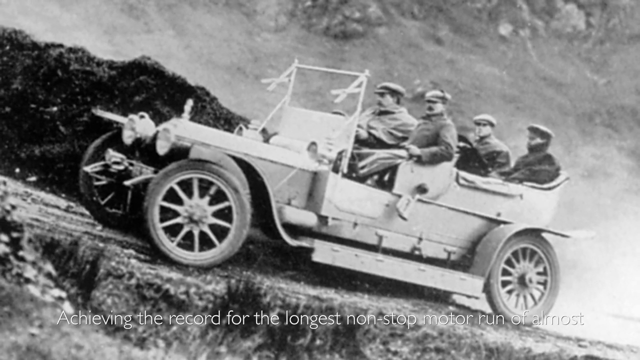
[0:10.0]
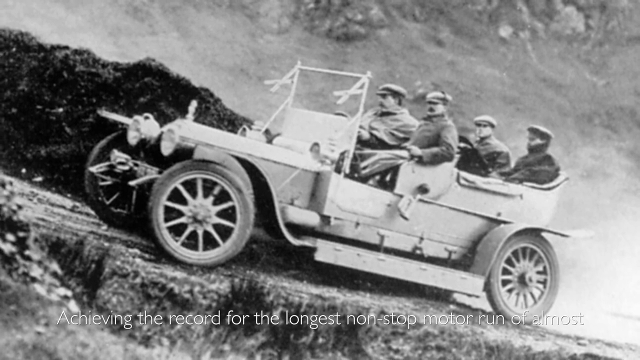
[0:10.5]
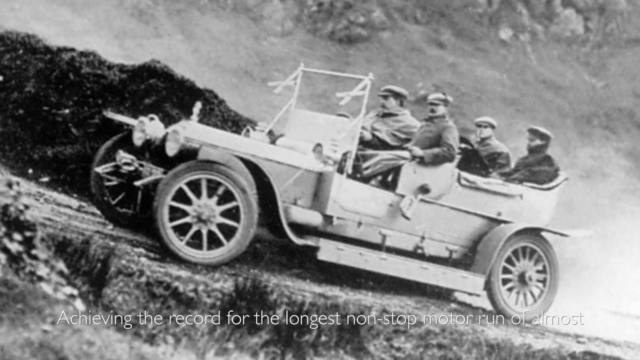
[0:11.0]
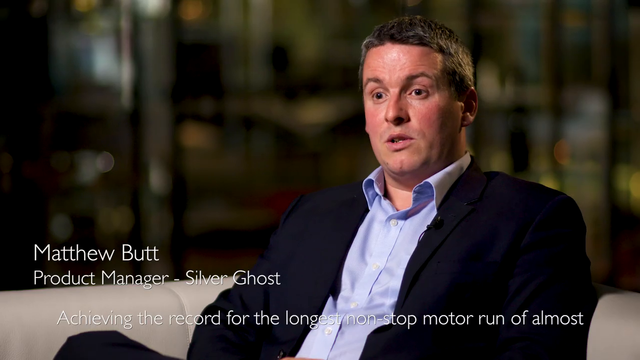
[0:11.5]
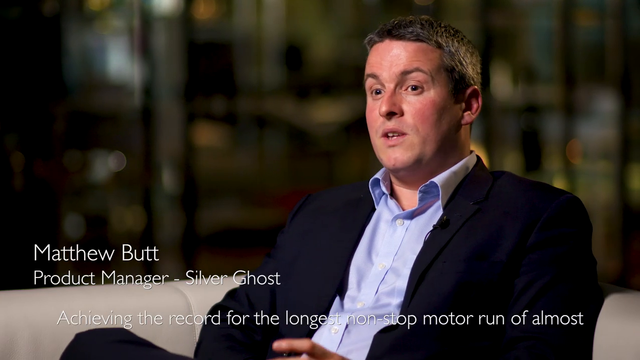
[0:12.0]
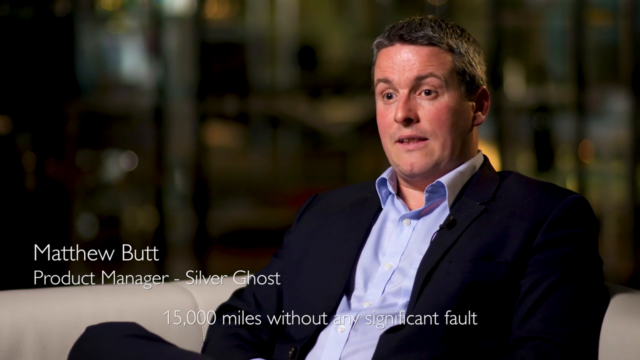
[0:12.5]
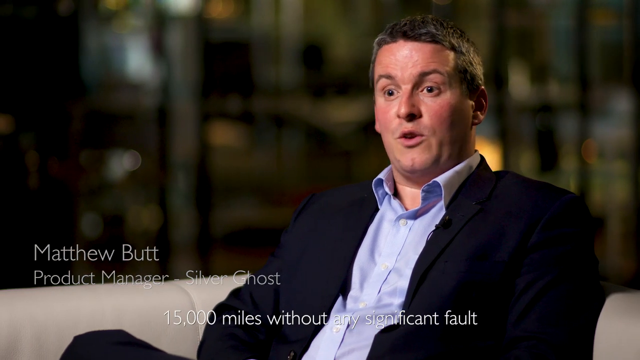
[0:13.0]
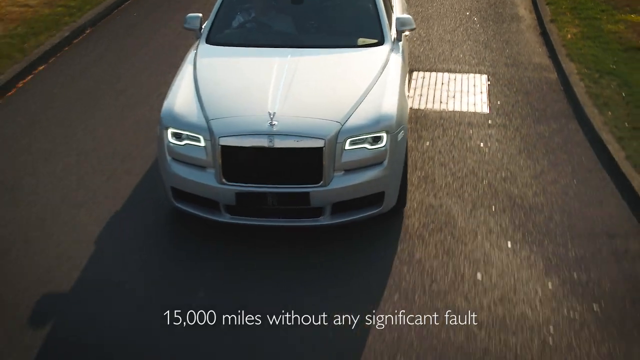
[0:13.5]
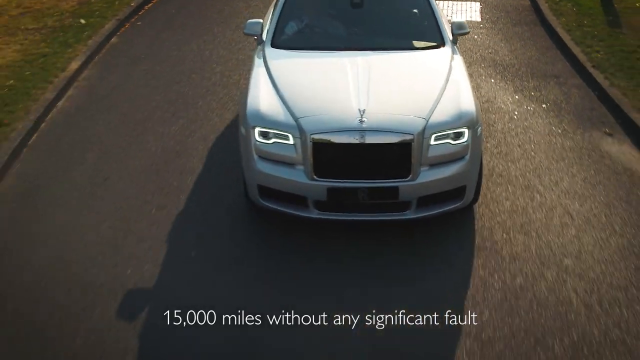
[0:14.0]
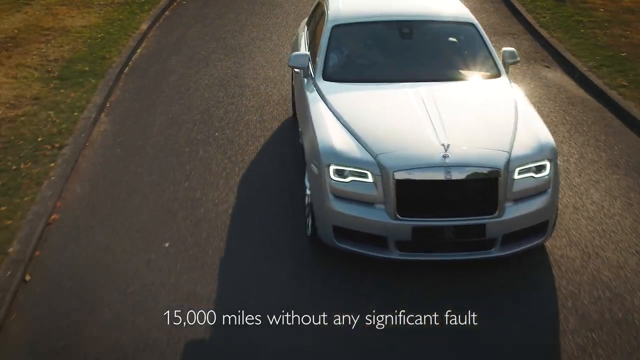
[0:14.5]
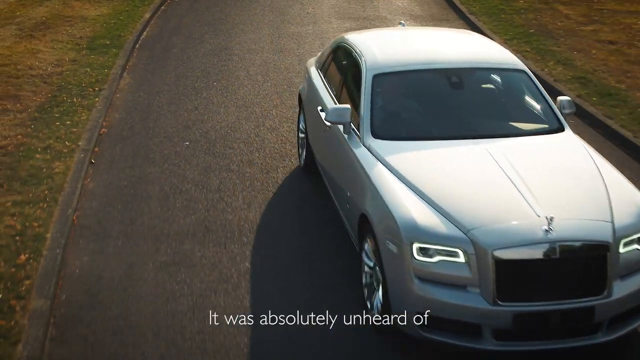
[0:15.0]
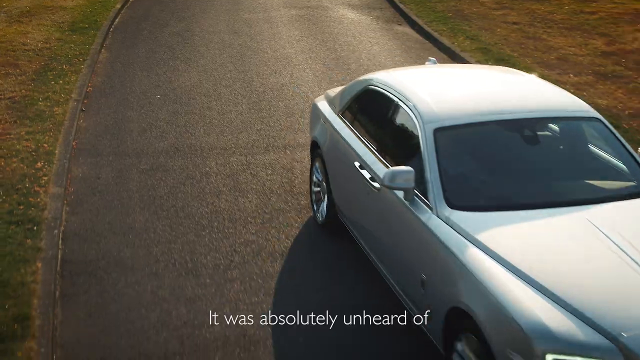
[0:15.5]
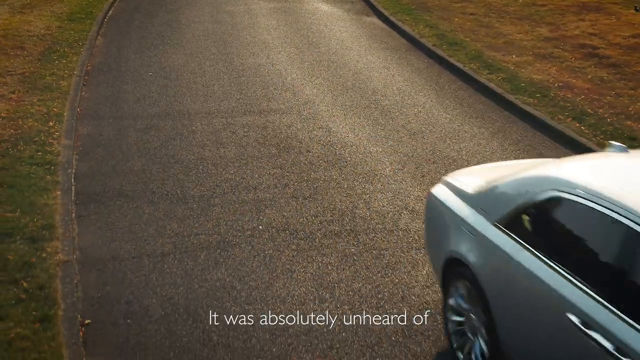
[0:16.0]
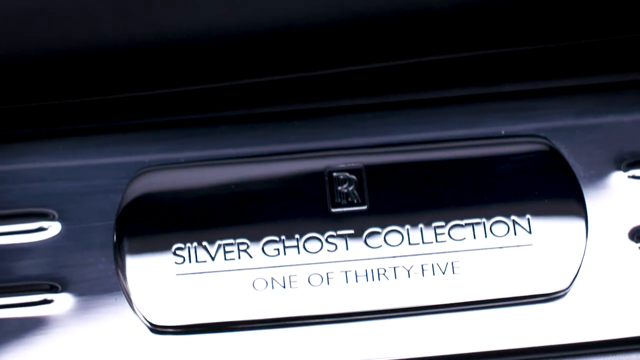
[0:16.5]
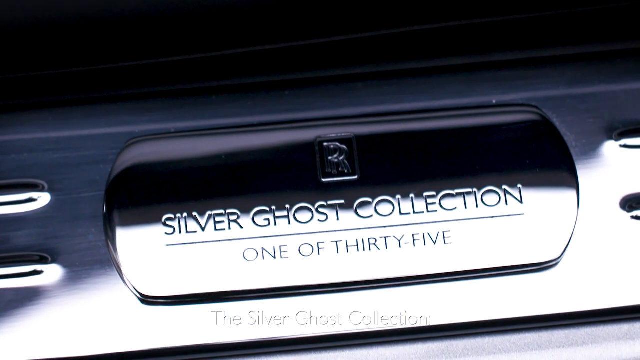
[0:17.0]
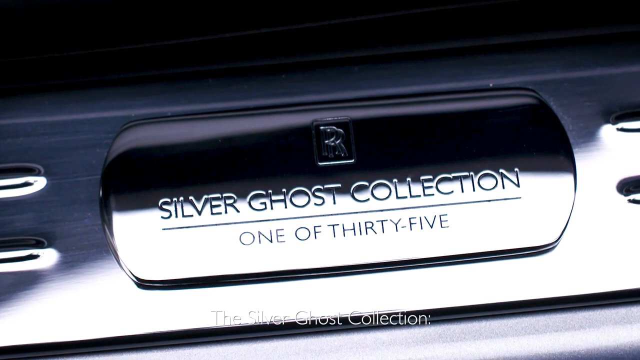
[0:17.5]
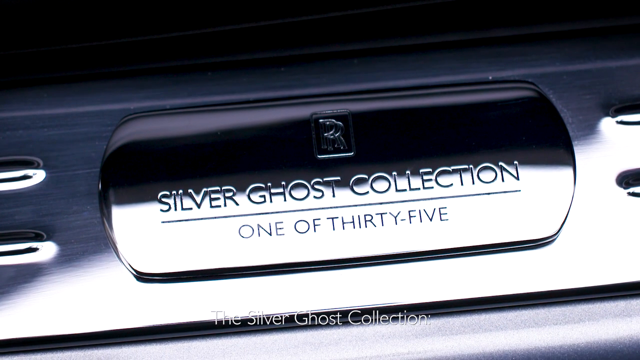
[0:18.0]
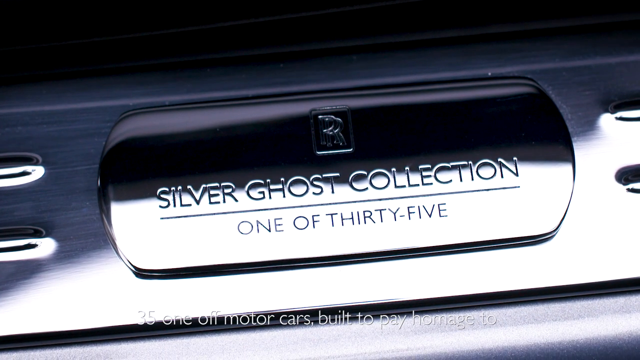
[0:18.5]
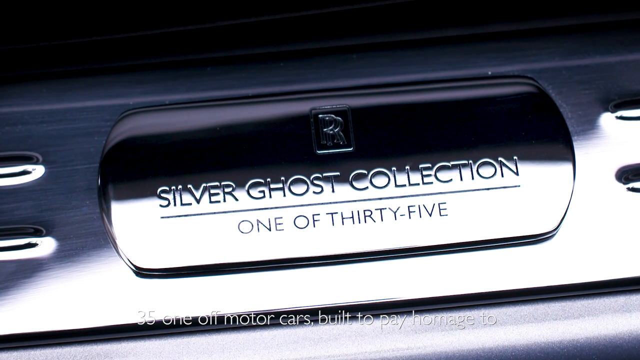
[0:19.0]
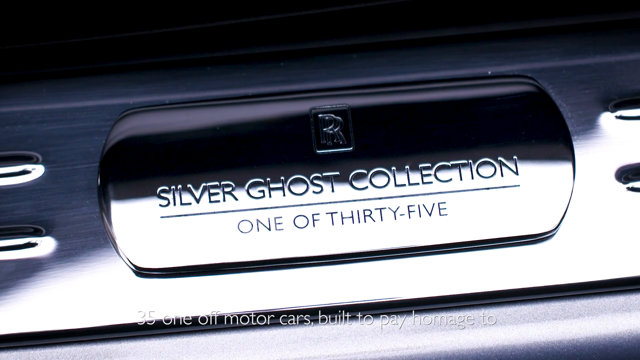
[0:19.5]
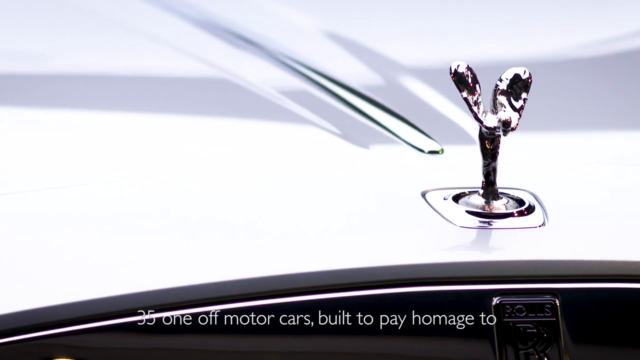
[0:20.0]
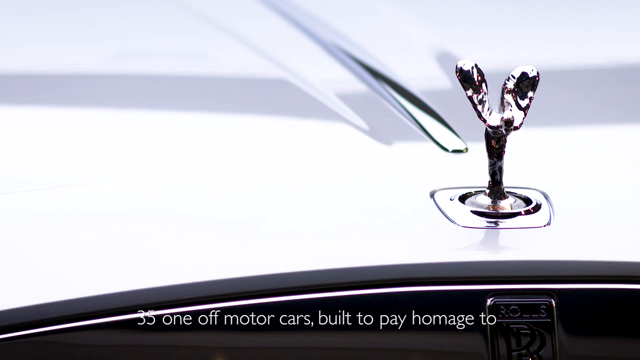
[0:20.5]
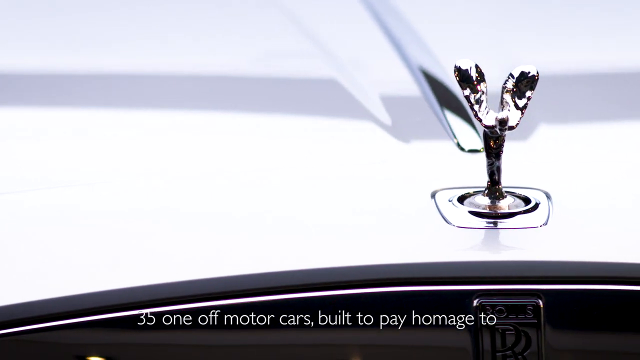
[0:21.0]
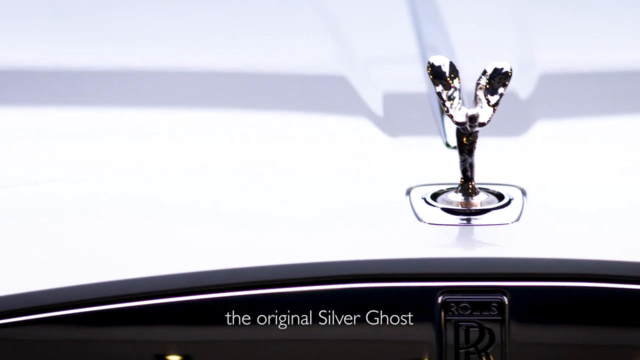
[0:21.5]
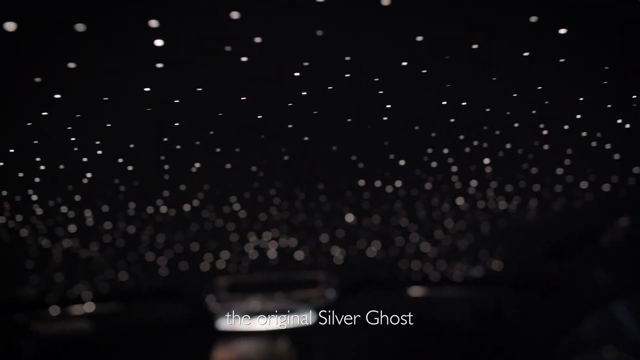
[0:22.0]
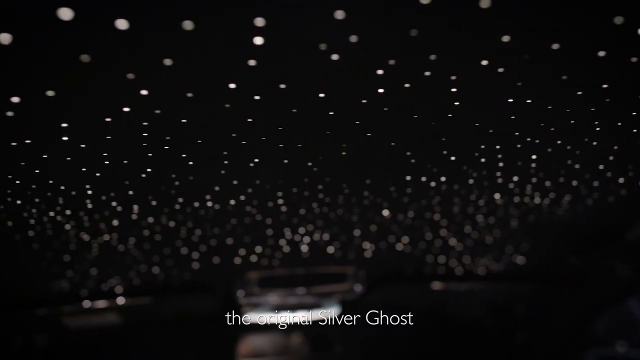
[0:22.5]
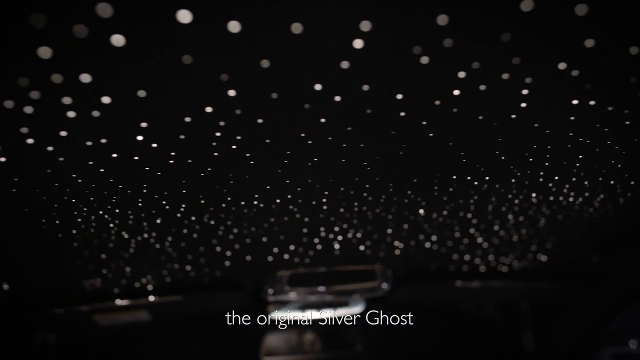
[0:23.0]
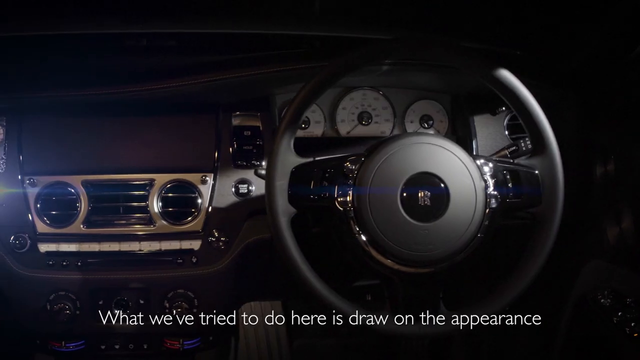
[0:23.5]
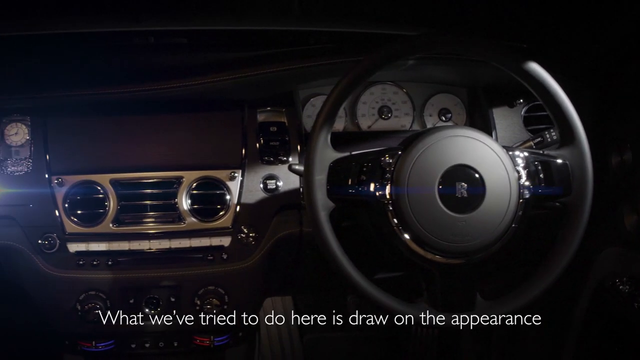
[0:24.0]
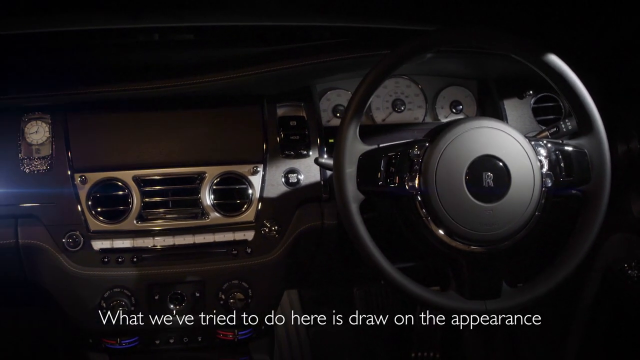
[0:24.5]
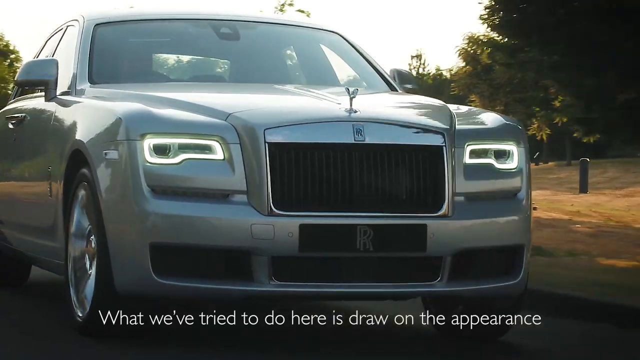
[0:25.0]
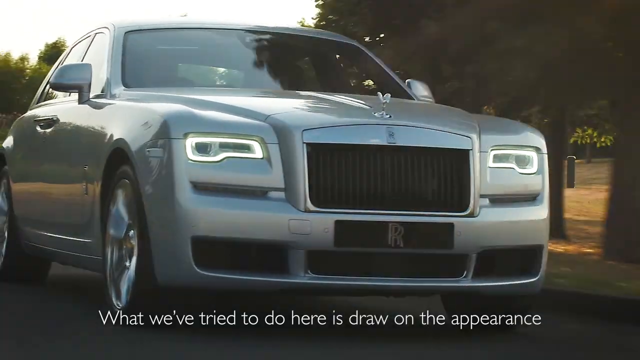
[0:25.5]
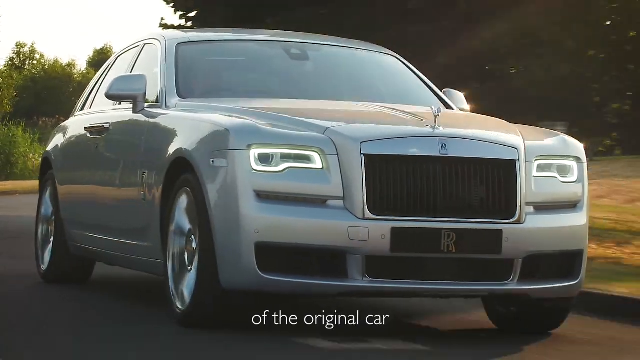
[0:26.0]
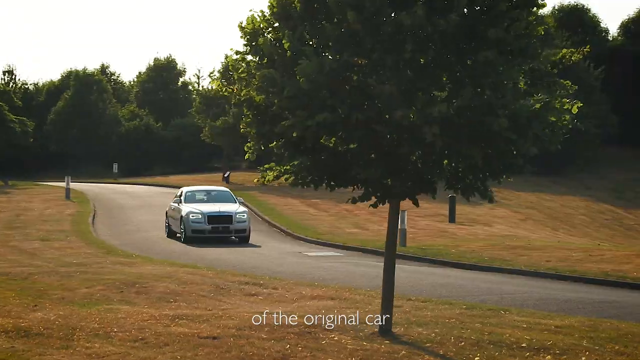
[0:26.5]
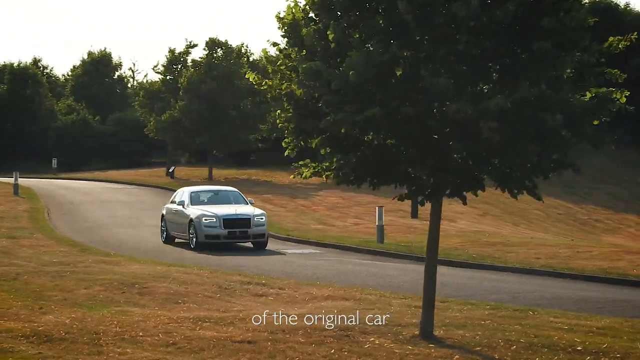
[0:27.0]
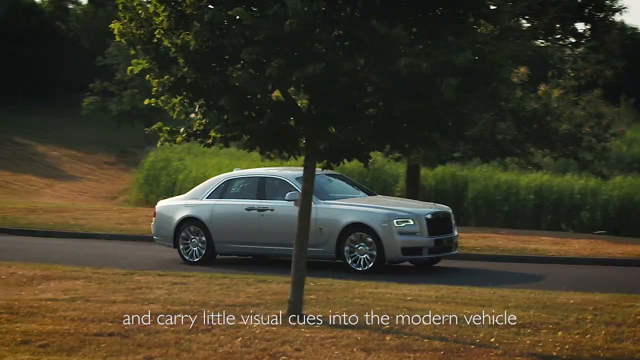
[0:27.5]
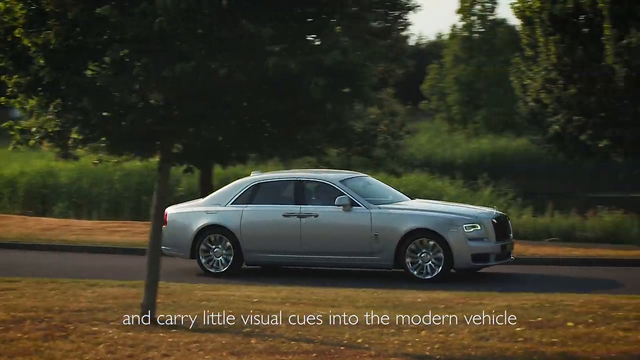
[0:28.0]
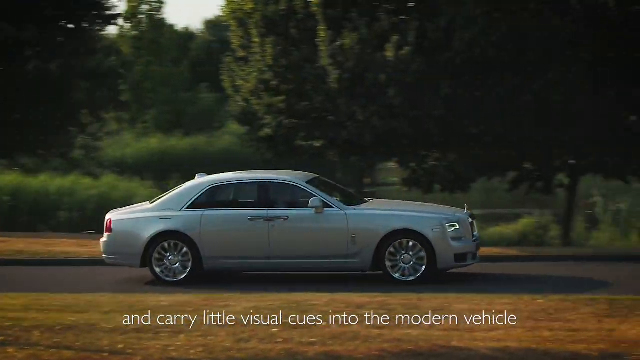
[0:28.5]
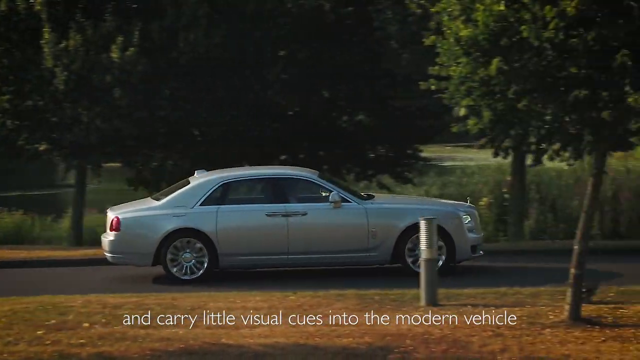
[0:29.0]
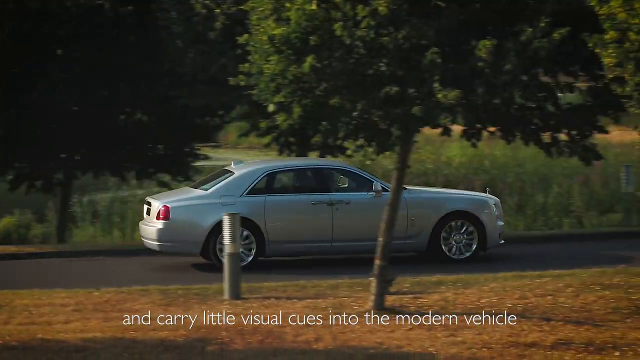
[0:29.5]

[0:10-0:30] An old car, probably from the early 1900s, goes up a hill with four men in it. Next comes an interview with Matthew Butt, a product manager. A brand new car with tinted windows all the way around appears, and underneath it text reads "15,000 miles without any problem," followed by "silver ghost collection one of 35" and "35 one-off motor cars." Parts of the car are shown; it looks like a Rolls Royce, since up close there is the little medallion on the front with the wings up in the air, and an R underneath the grille. The lights have a modern shape and are not round. The car drives down a very nice road past trees planted in a row; no buildings are visible, and it looks like it might be a driveway.